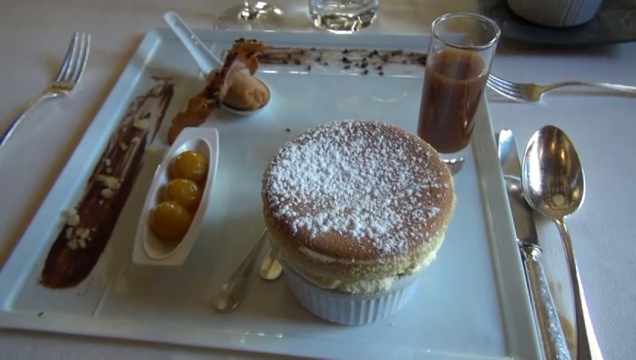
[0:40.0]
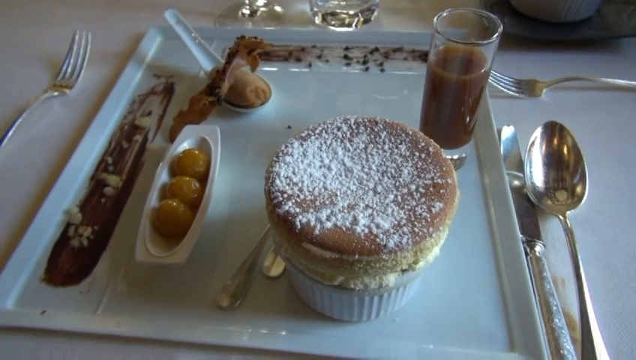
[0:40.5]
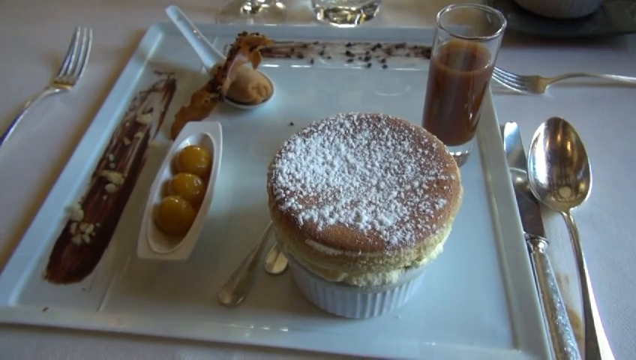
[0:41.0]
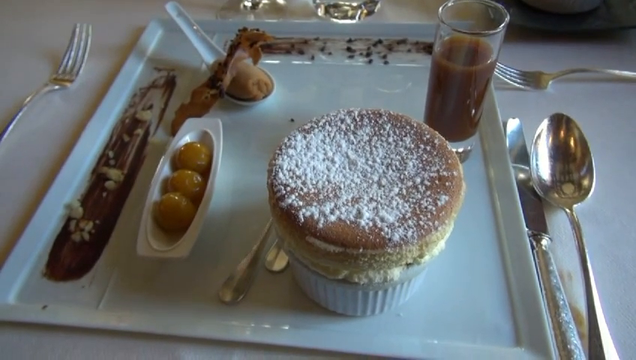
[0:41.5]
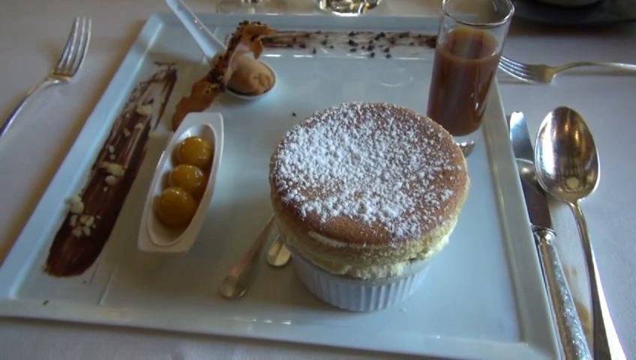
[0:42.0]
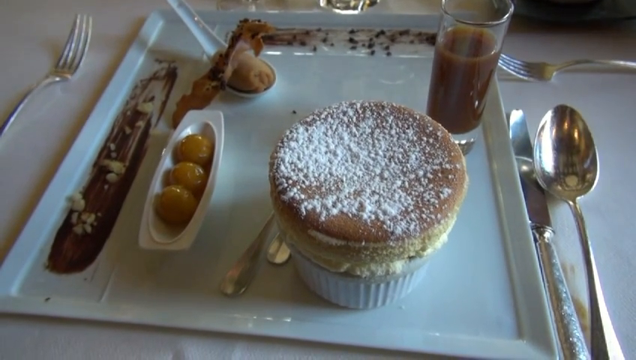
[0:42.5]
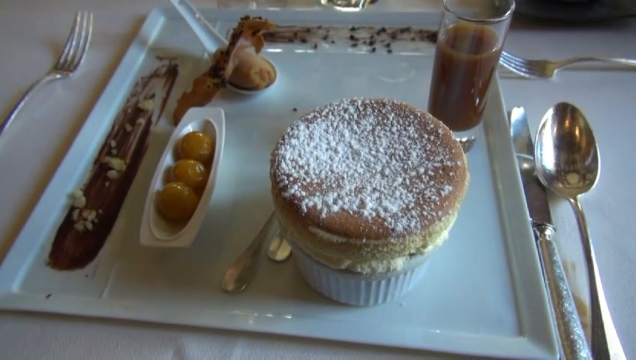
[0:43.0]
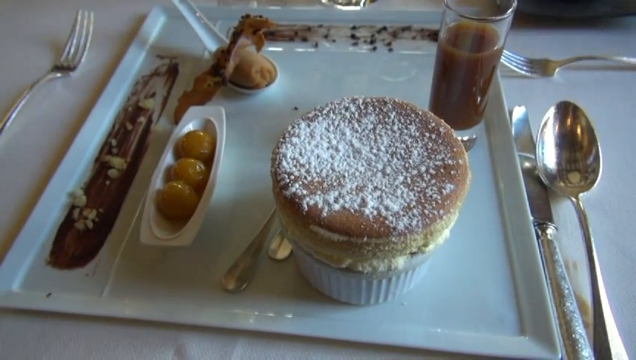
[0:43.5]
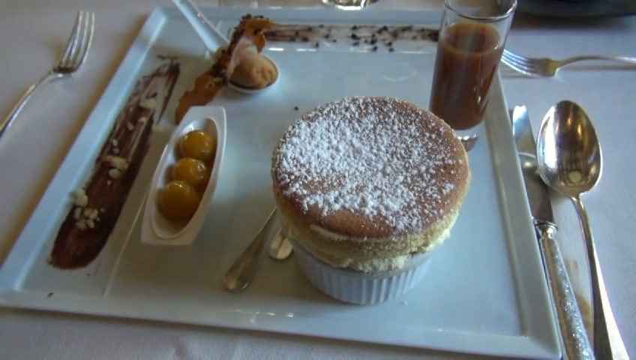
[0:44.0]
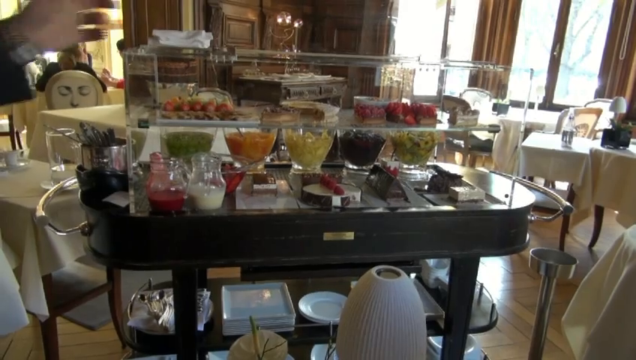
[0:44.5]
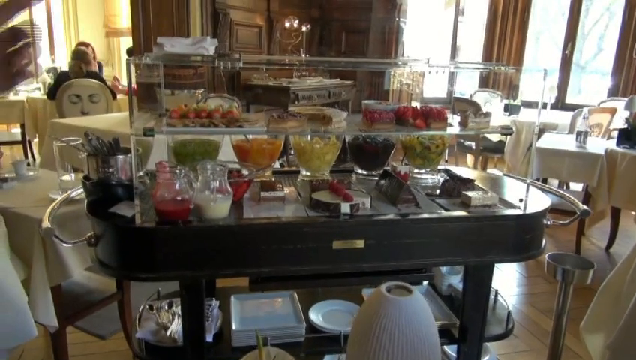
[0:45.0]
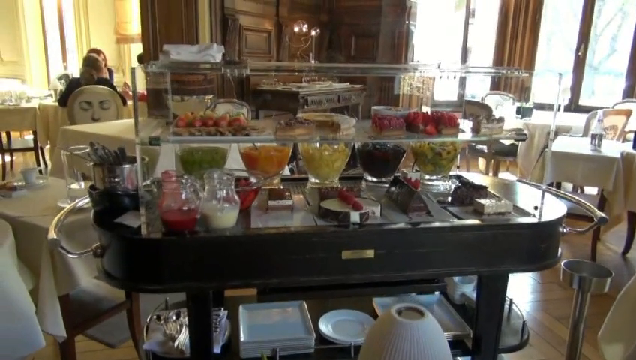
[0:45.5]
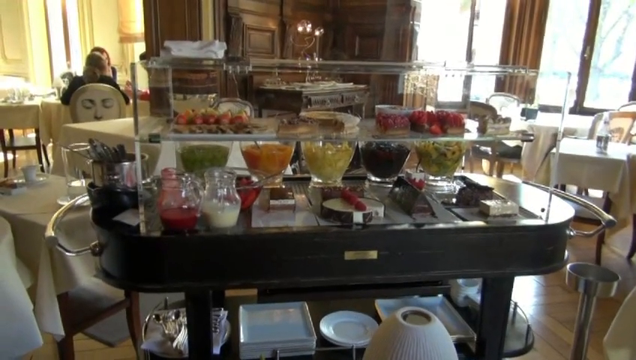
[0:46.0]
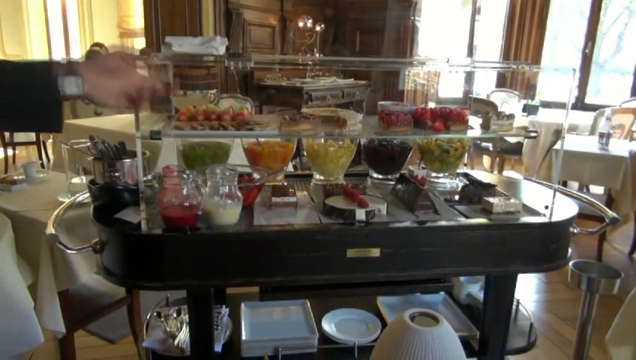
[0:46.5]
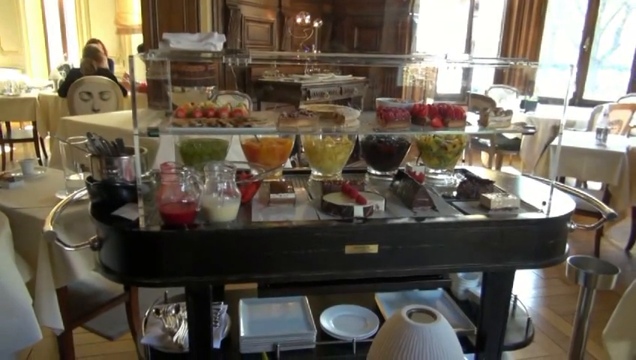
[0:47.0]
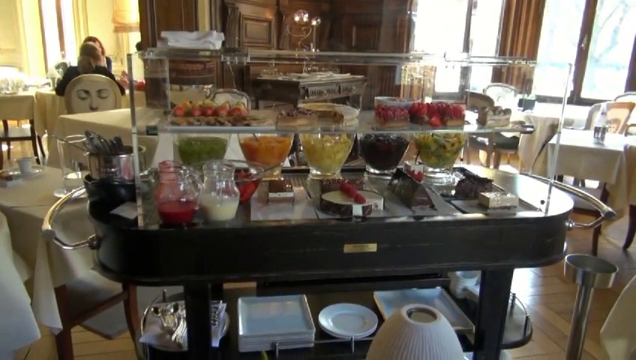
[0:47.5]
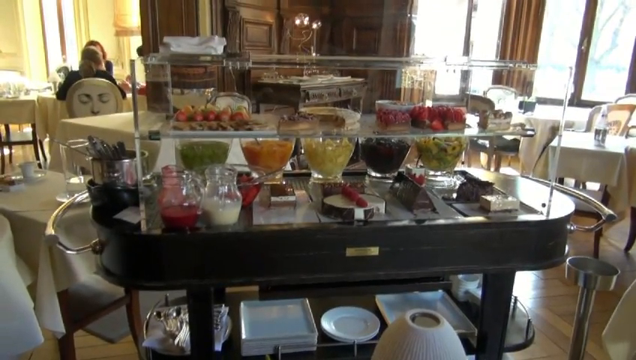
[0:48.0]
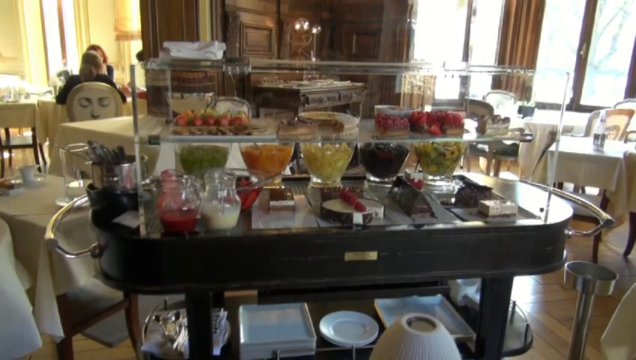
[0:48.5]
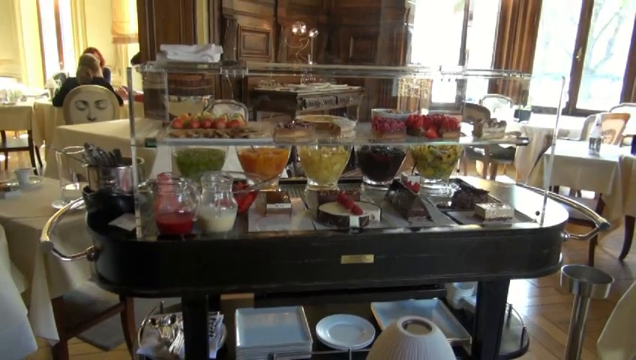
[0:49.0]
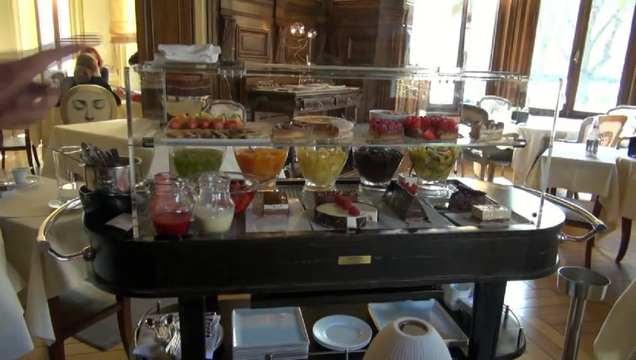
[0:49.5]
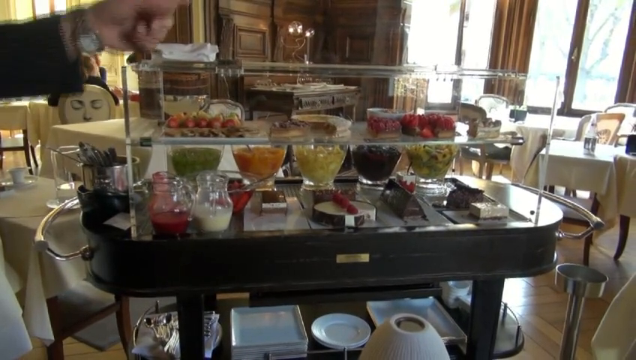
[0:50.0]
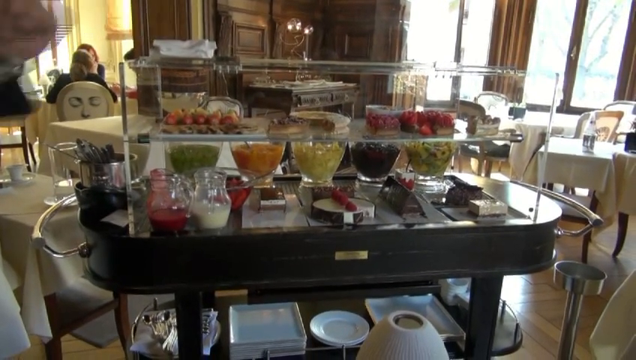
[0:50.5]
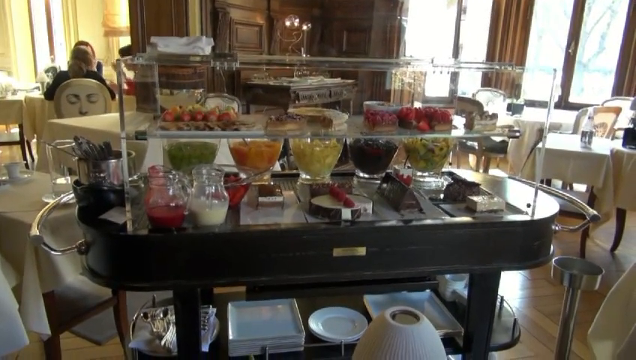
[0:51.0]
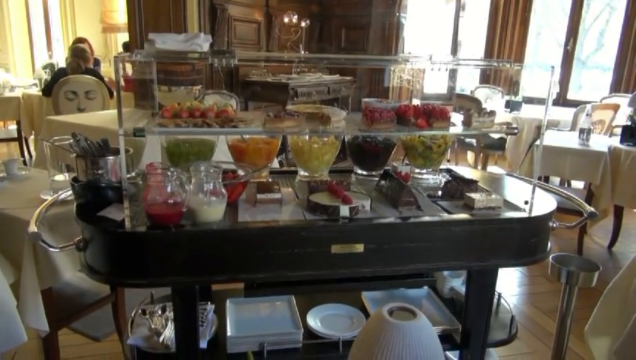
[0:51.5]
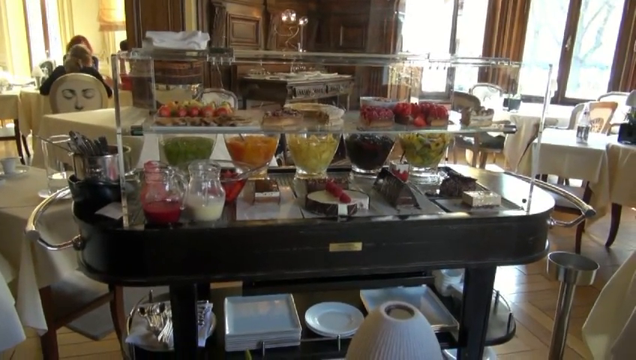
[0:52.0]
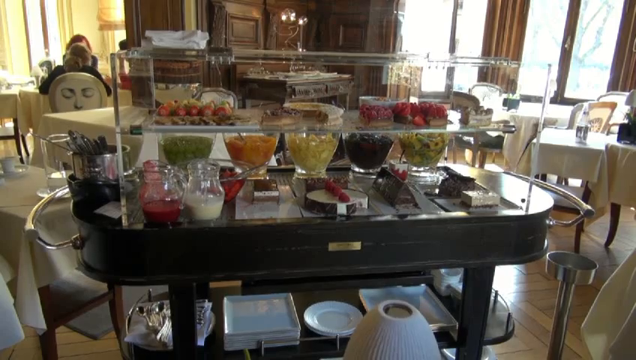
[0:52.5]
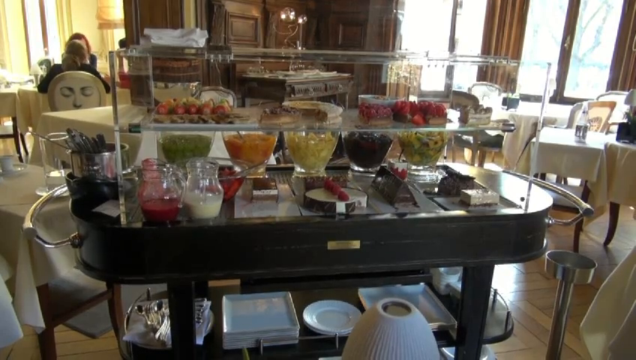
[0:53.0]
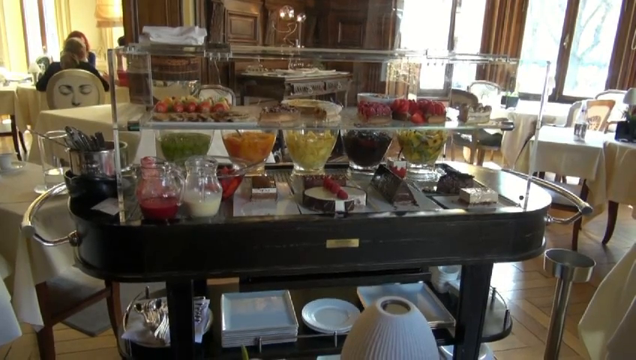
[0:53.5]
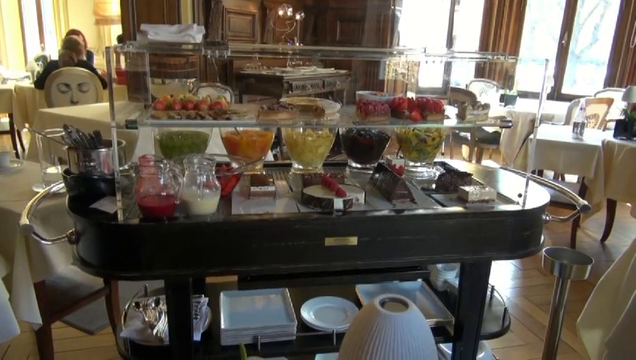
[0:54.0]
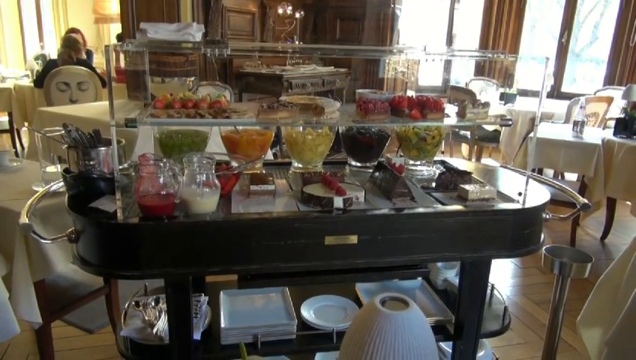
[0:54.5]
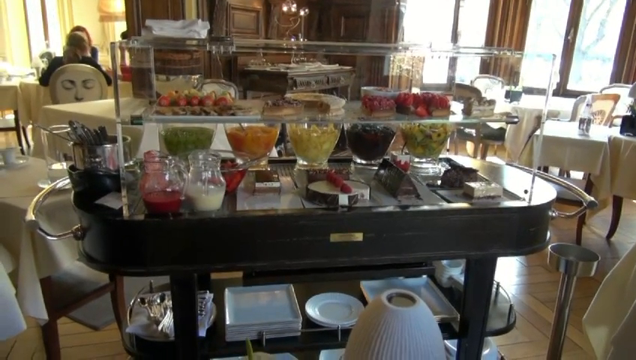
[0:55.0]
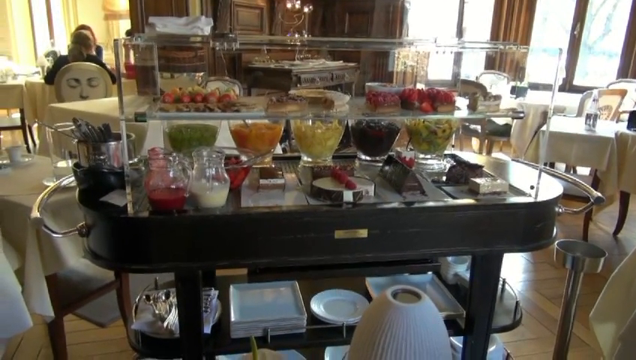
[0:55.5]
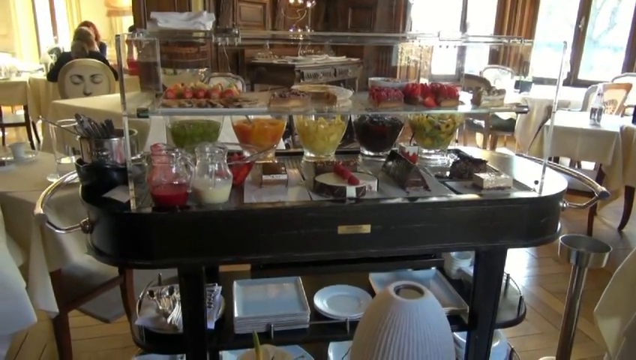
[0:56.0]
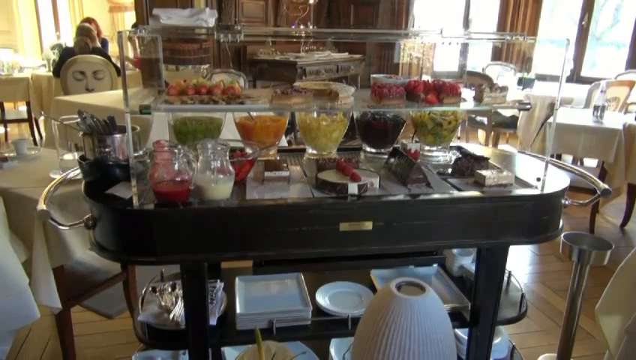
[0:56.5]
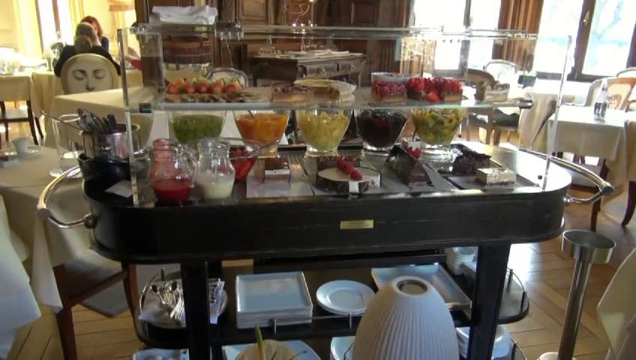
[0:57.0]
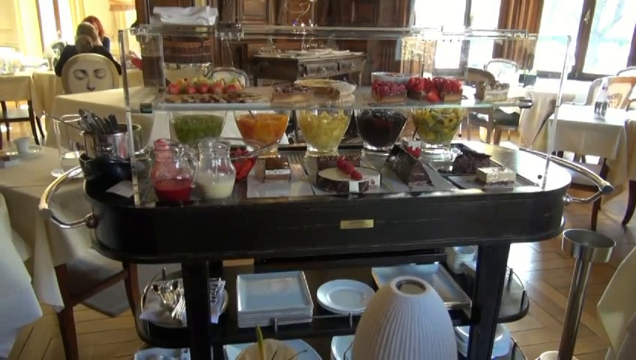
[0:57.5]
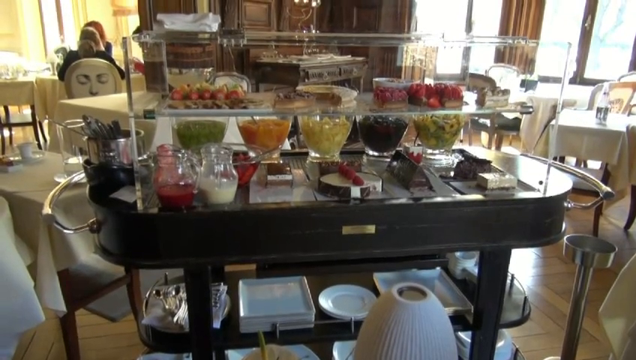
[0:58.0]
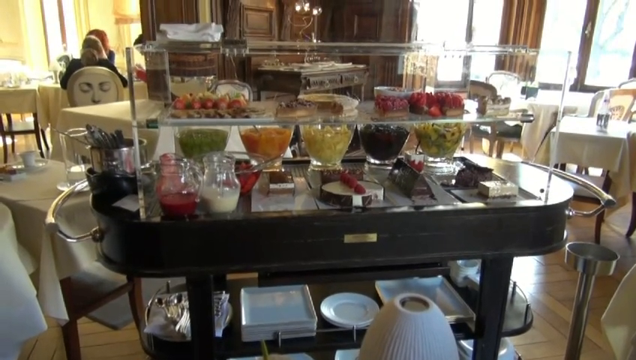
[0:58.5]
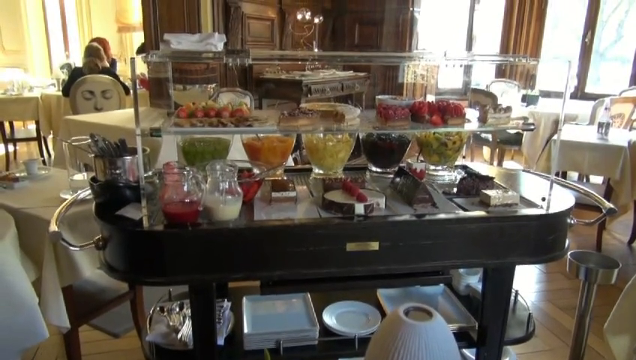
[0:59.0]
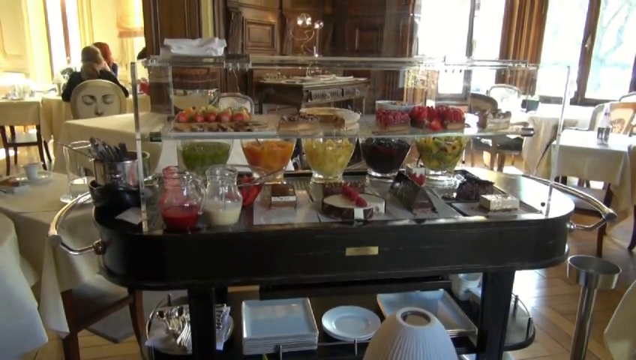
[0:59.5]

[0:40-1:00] The plate is still shown, then the view switches to an oval table with a dessert bar holding fruit in different layers, seen from a distance. Strawberries appear to be in there, along with some type of liquid that can be poured, possibly milk, apparently a topping. The other side seems to have green jello and maybe peaches or pudding, though it is hard to tell. On the left side, people are sitting down. The white chairs have a face on the back, which looks as if someone drew it with a marker but is apparently the actual design.